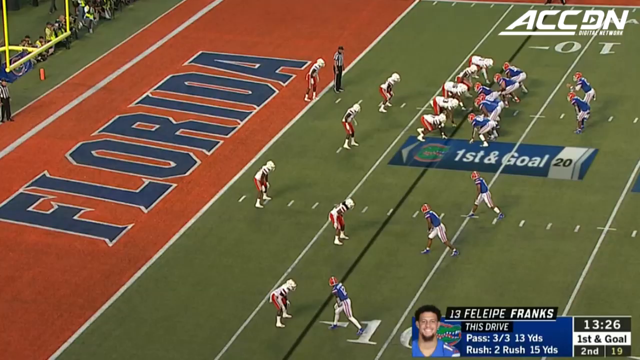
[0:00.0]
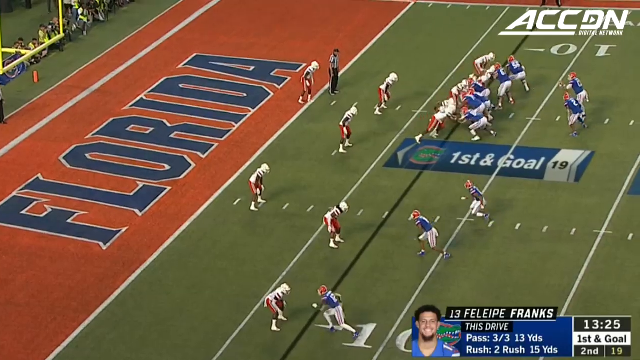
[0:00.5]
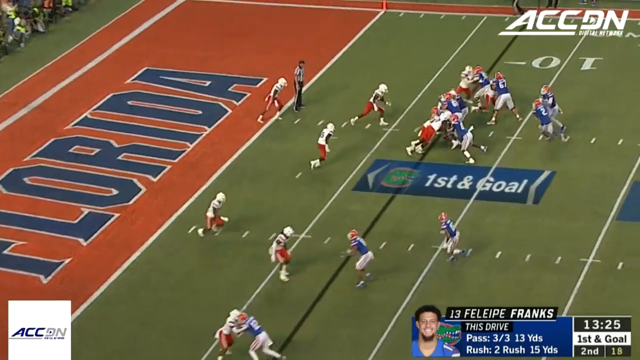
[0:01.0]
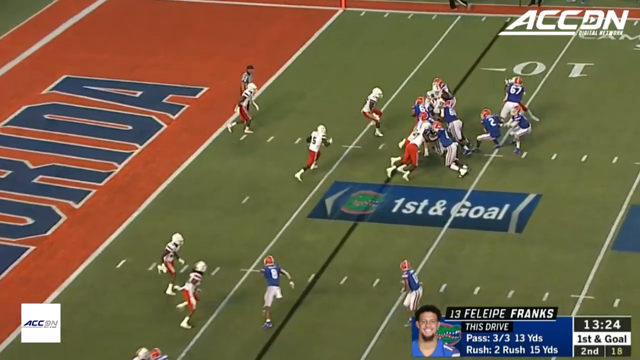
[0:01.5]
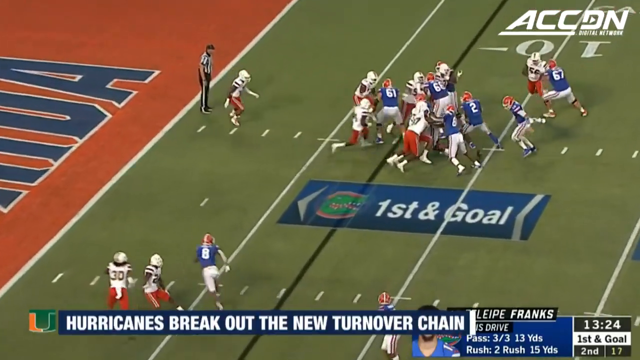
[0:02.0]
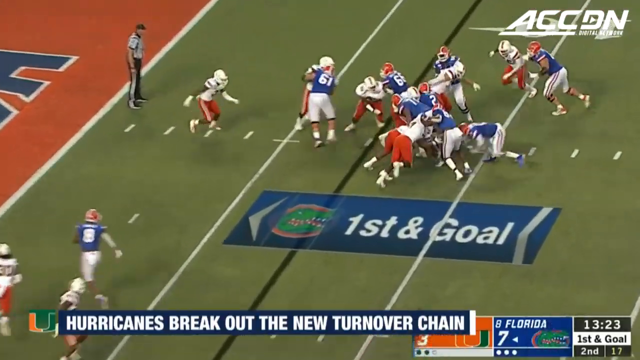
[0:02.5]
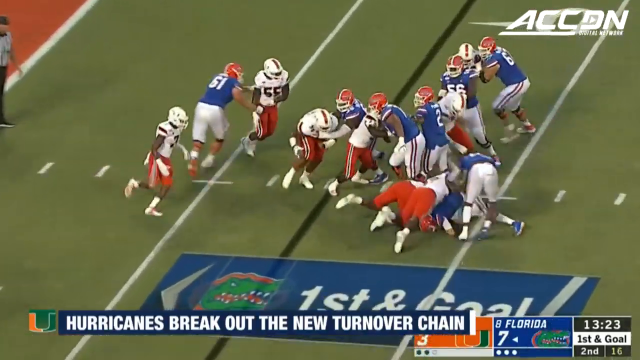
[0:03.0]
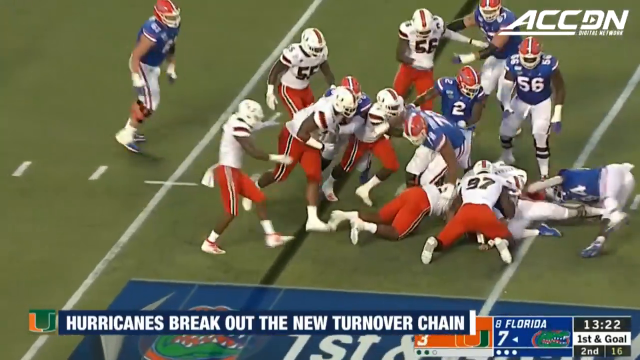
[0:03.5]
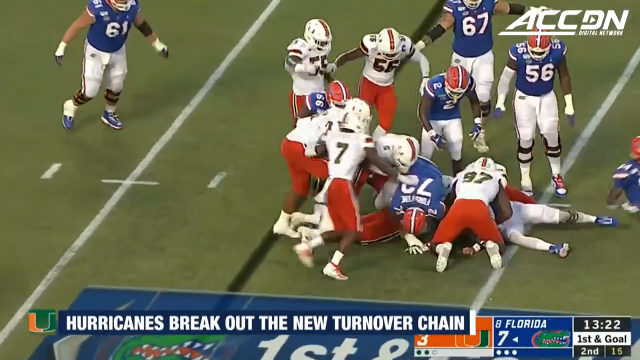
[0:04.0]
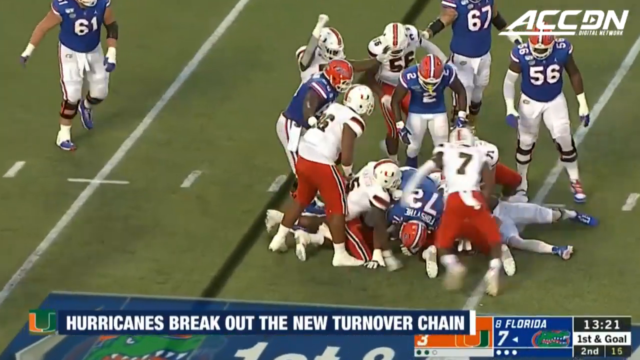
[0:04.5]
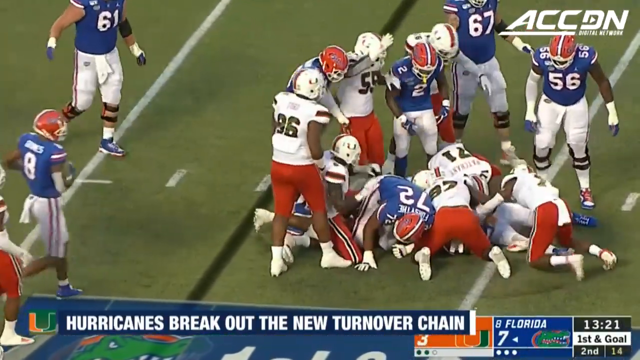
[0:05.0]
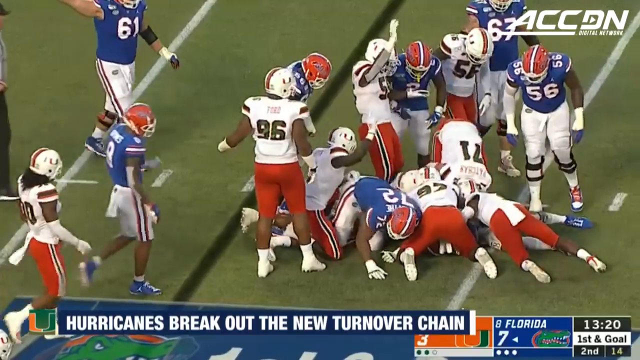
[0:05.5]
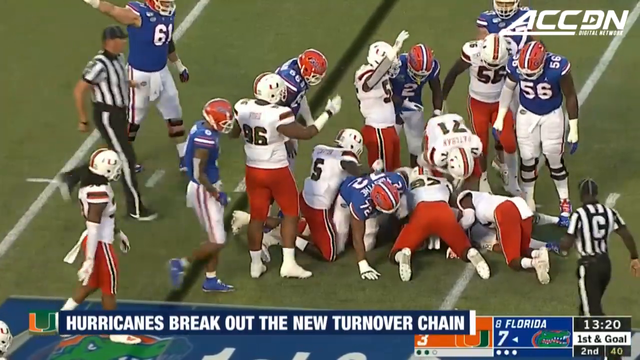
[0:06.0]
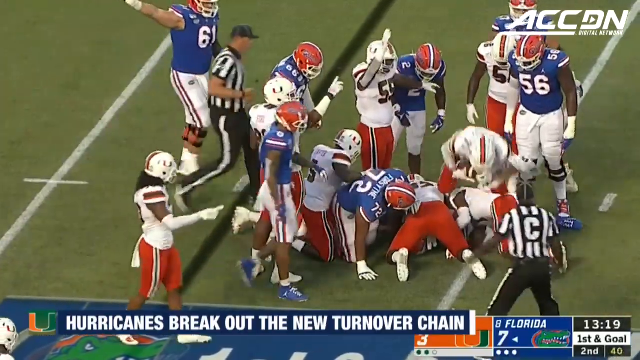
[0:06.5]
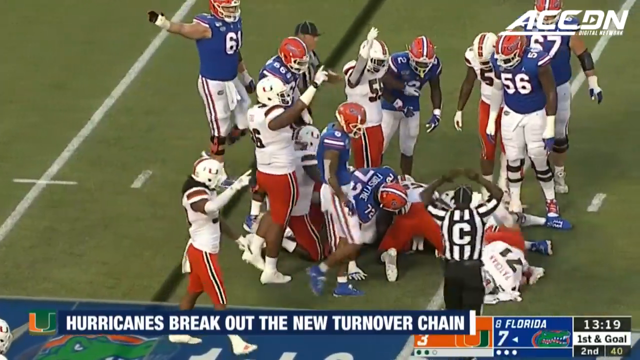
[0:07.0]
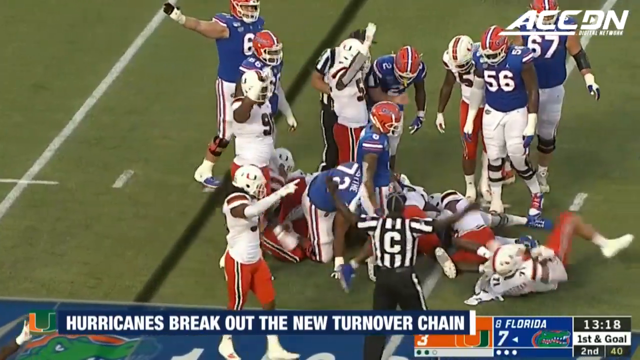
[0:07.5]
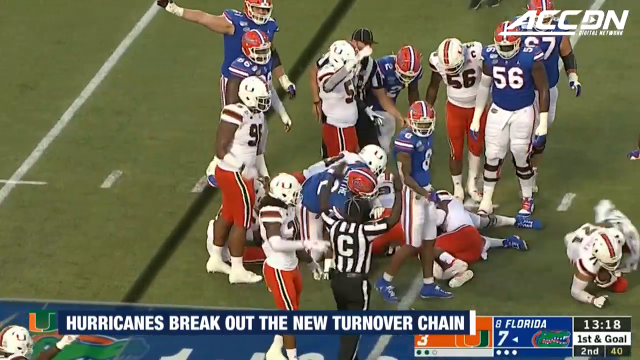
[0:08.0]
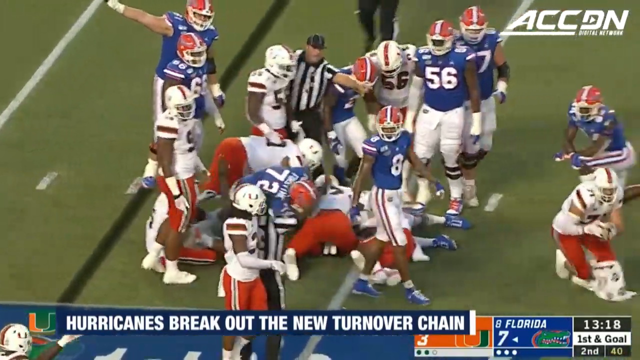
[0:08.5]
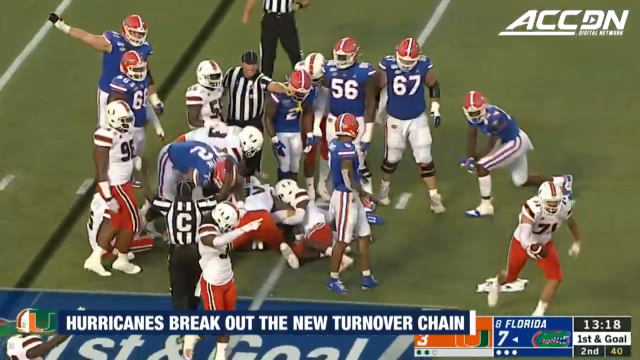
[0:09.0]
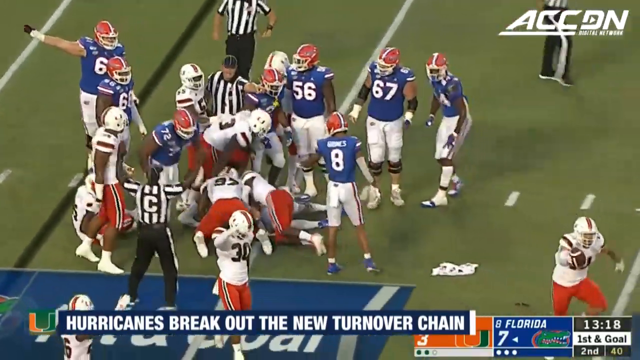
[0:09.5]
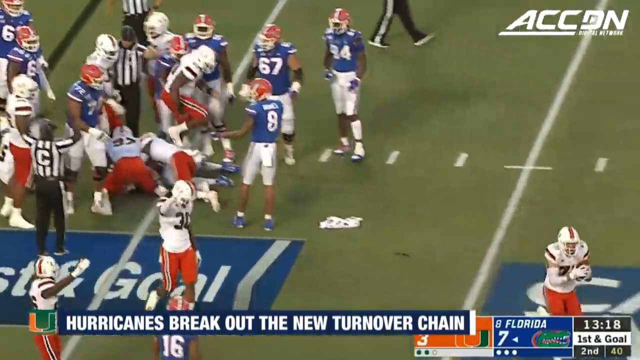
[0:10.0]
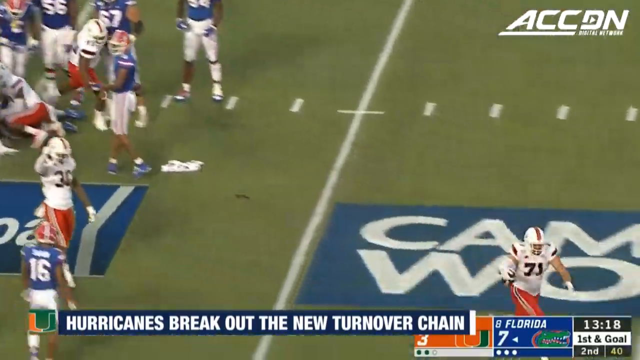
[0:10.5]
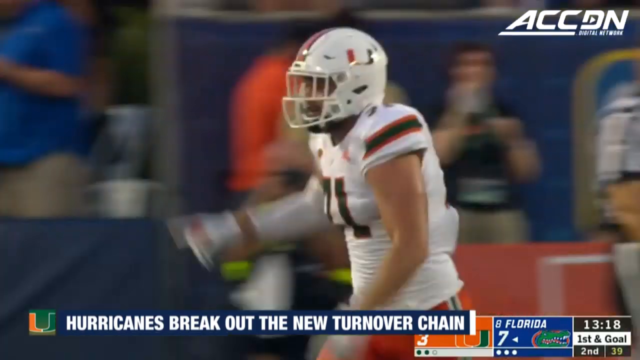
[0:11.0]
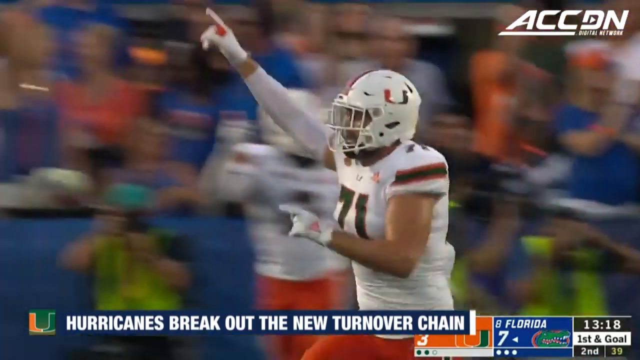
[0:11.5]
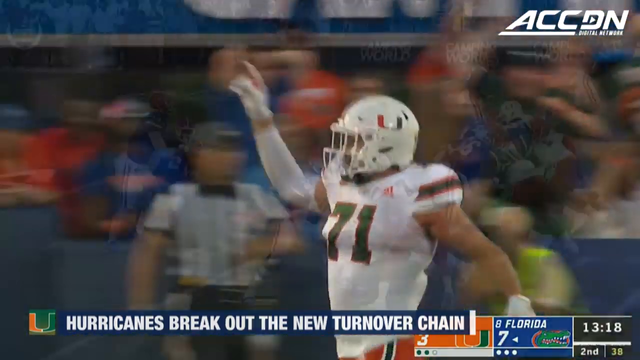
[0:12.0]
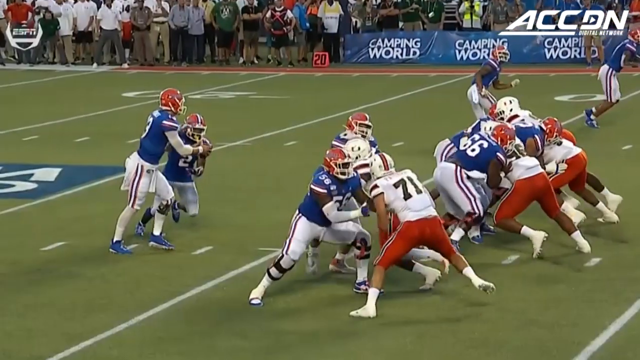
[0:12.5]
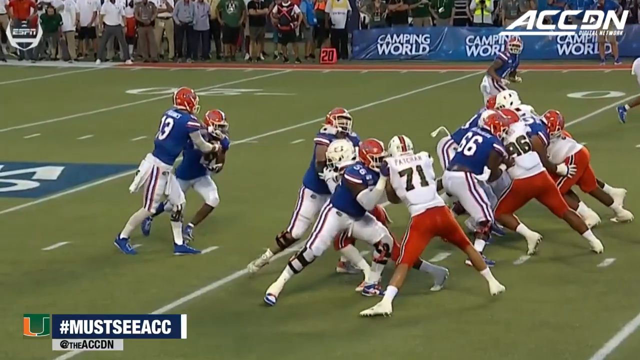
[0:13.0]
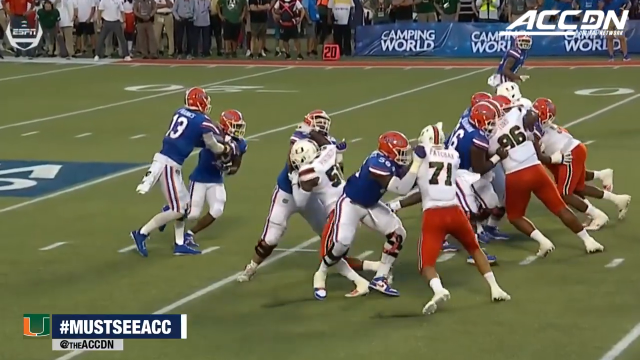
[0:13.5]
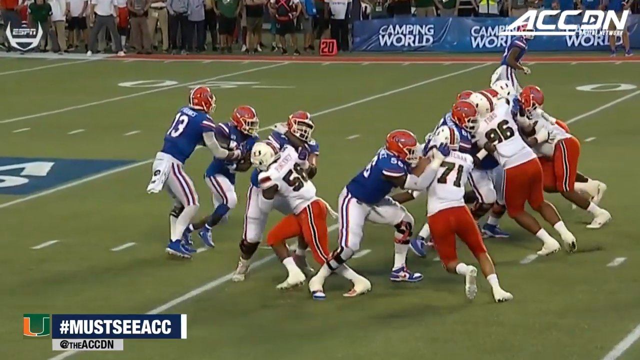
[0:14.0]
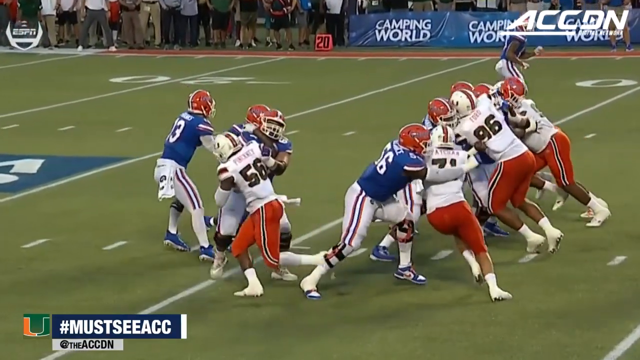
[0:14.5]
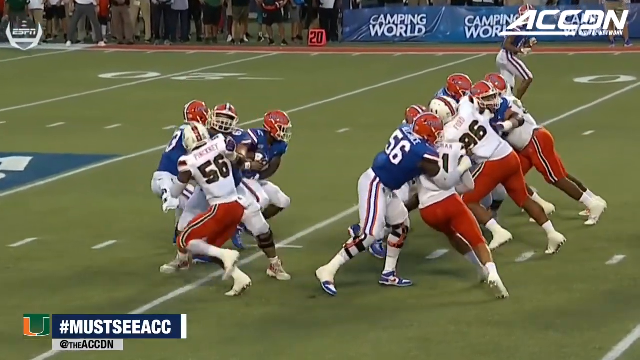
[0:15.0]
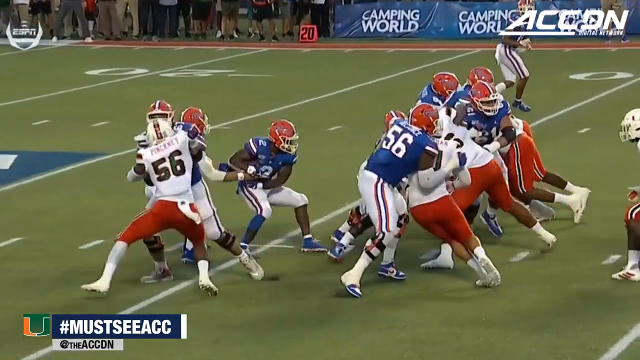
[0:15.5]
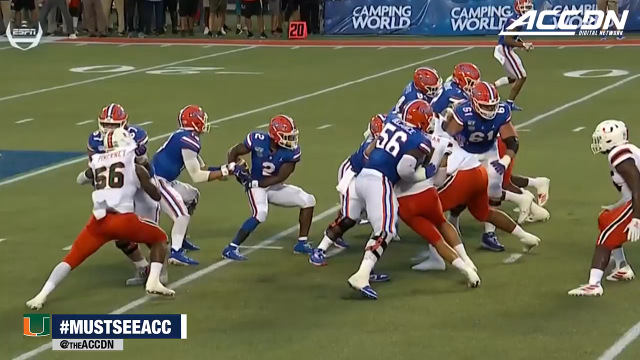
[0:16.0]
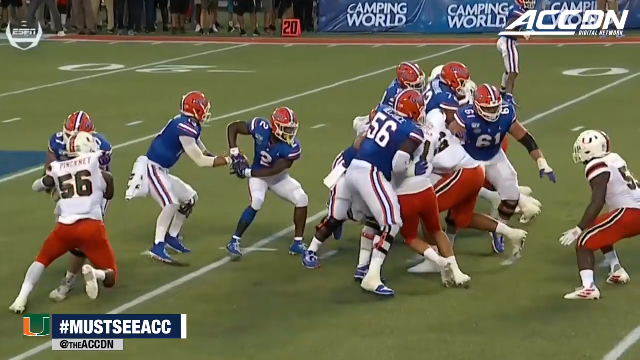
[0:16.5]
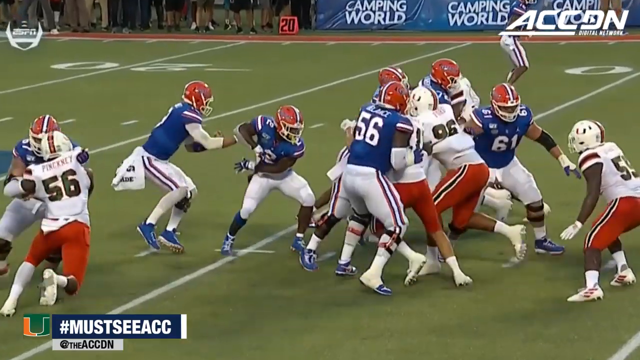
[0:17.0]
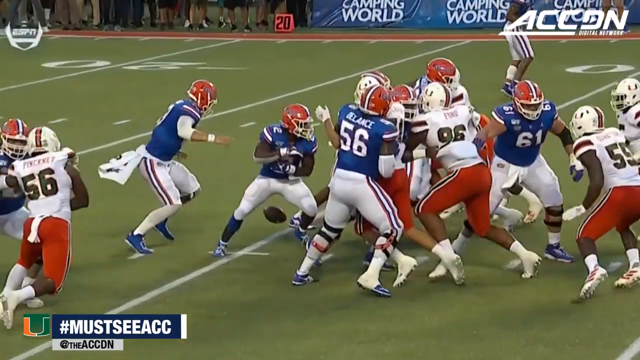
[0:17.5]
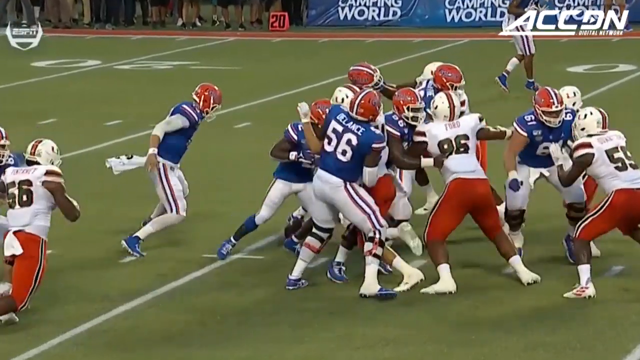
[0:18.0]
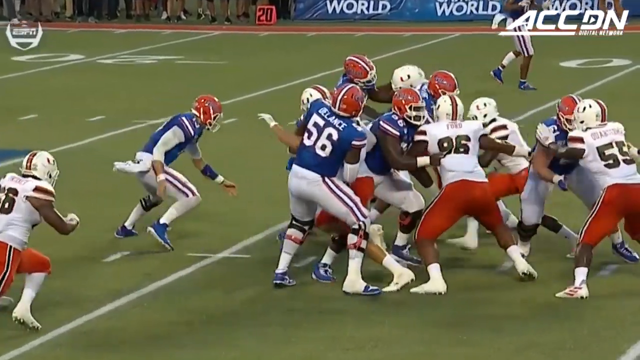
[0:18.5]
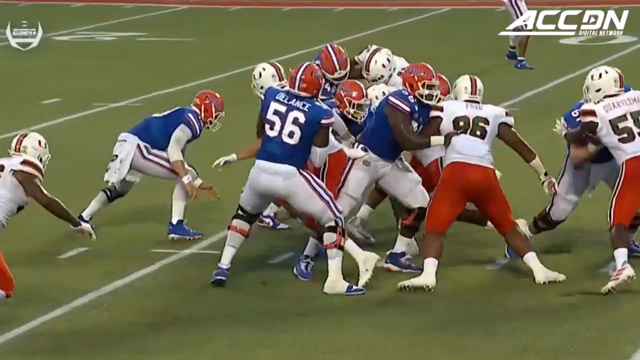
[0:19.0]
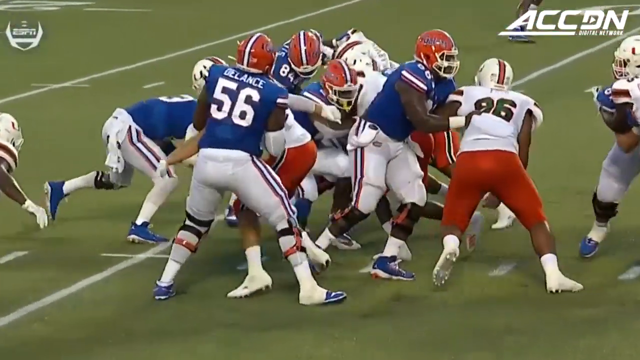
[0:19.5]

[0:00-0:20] A football game shows a team from Florida playing against an unidentified team. One team wears blue jerseys and the other white; the team in white jerseys also wears orange pants, while the team in blue jerseys wears white pants. The players are all kind of falling on top of each other during a play. A referee comes over, seemingly to break things up, waving his hands around, and one of the players runs triumphantly. The play is then shown in slow motion. Judging by the behavior of the player running around, it looks like the white team is the one that scored.